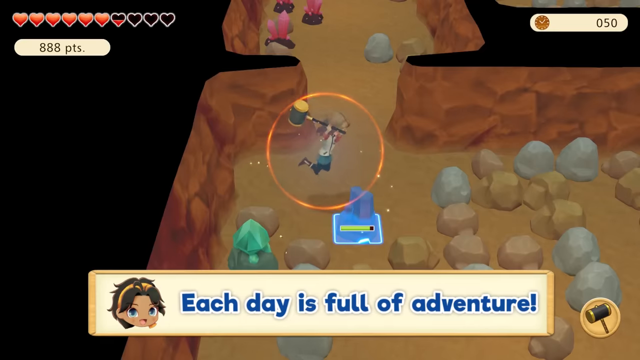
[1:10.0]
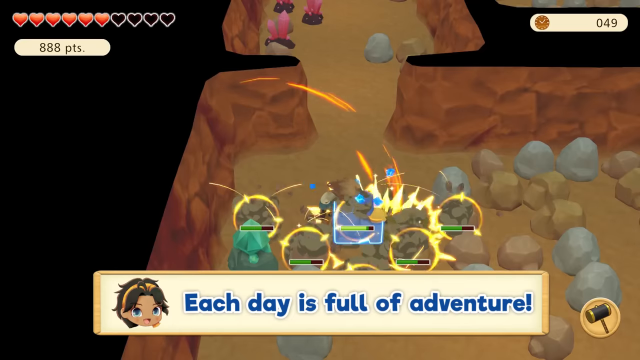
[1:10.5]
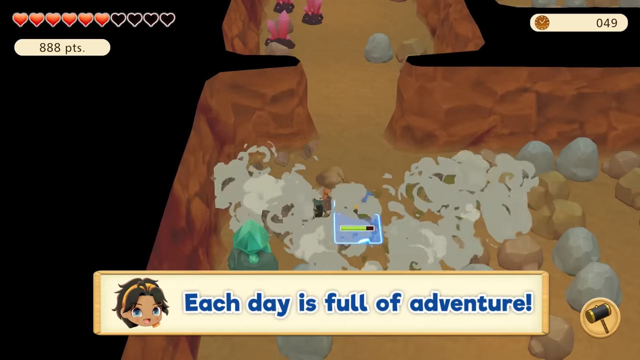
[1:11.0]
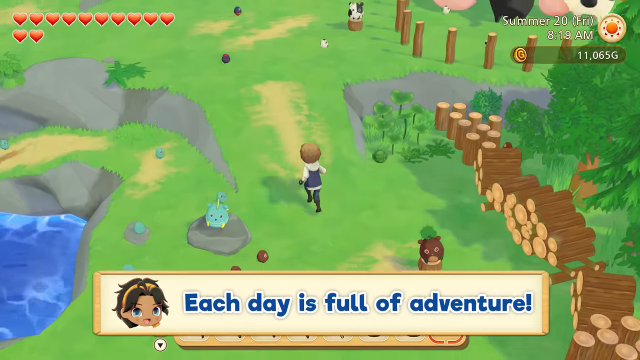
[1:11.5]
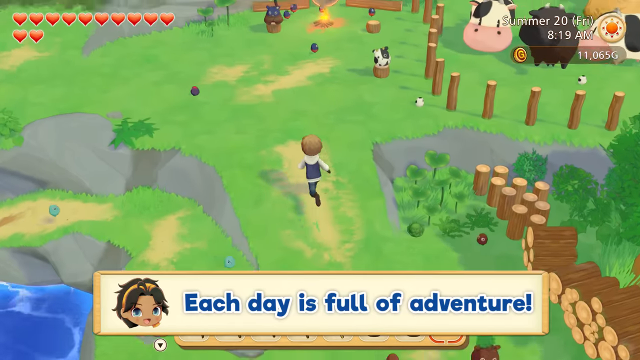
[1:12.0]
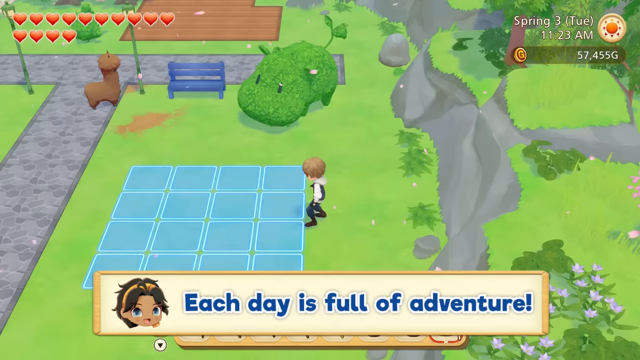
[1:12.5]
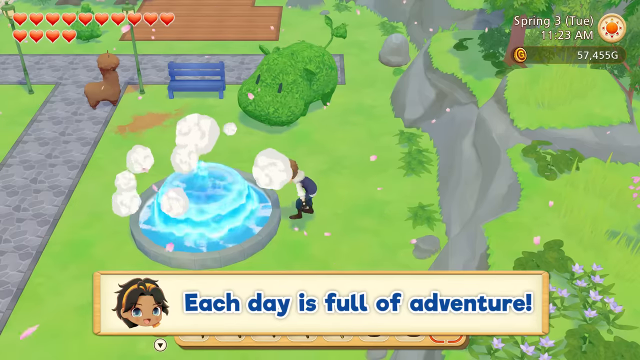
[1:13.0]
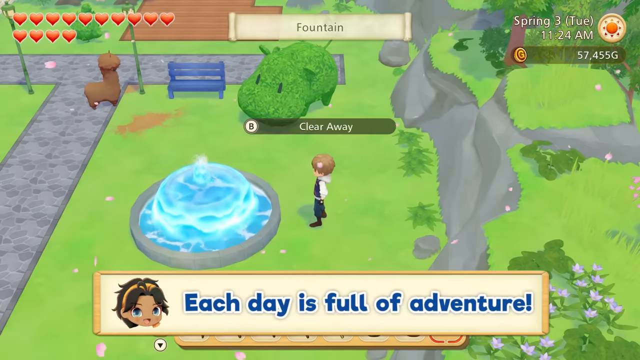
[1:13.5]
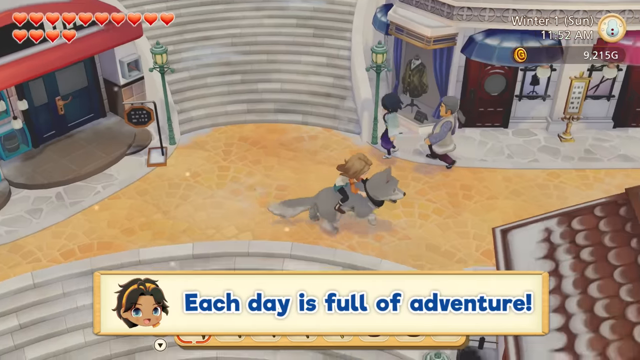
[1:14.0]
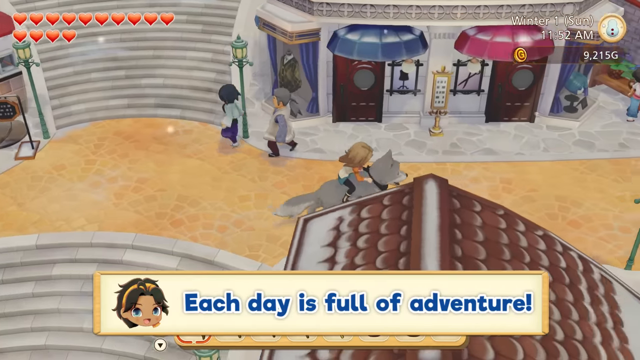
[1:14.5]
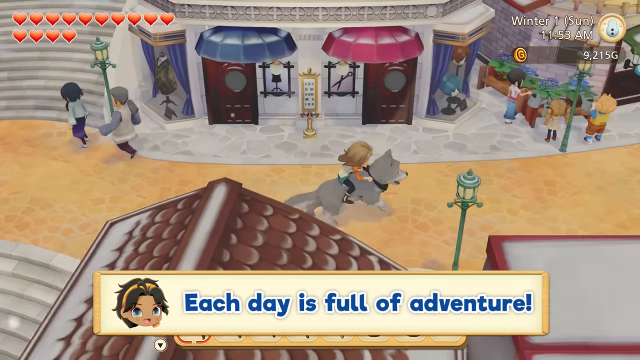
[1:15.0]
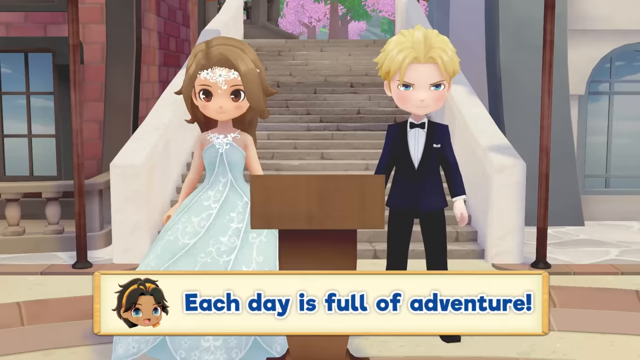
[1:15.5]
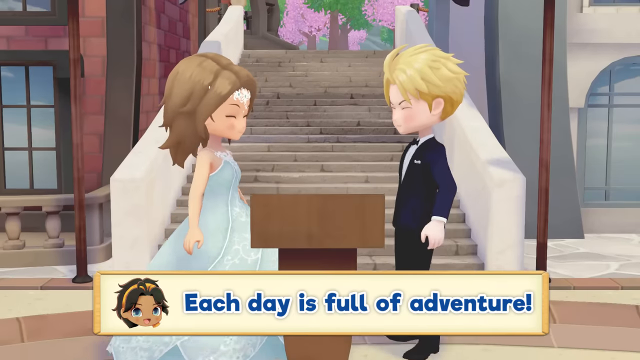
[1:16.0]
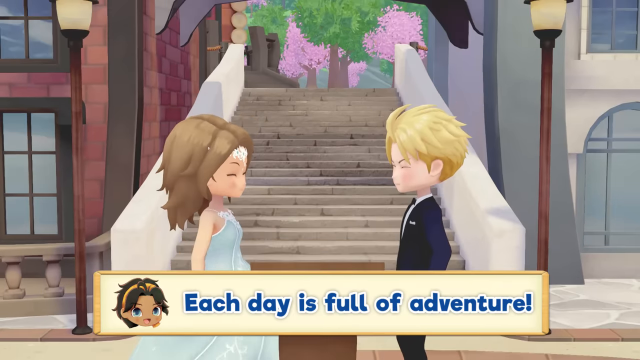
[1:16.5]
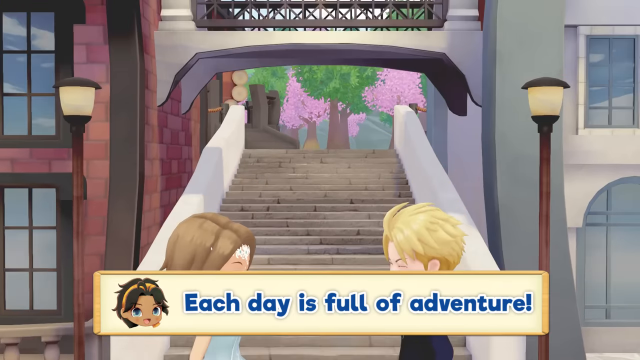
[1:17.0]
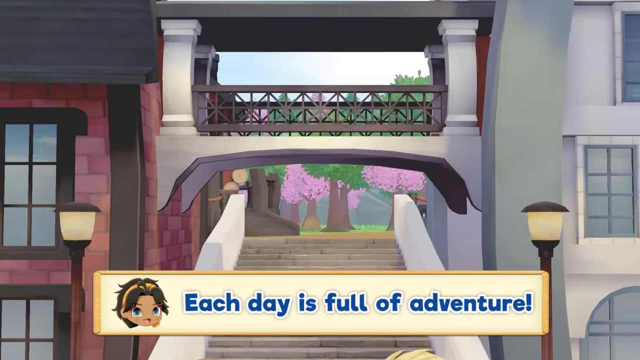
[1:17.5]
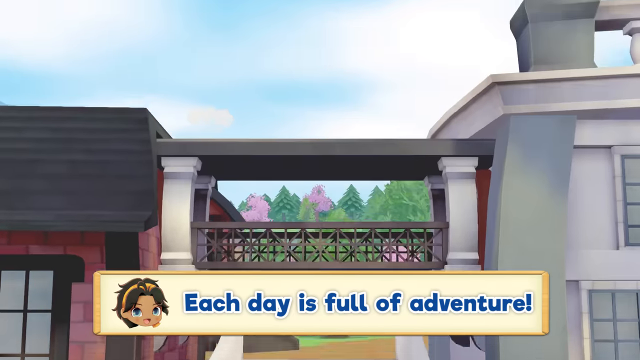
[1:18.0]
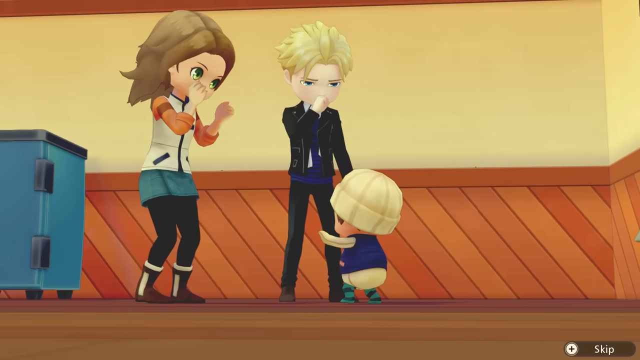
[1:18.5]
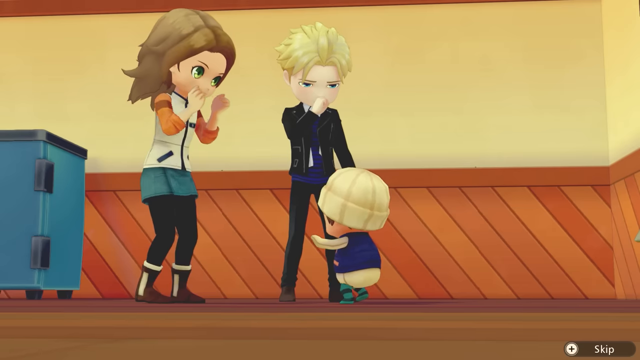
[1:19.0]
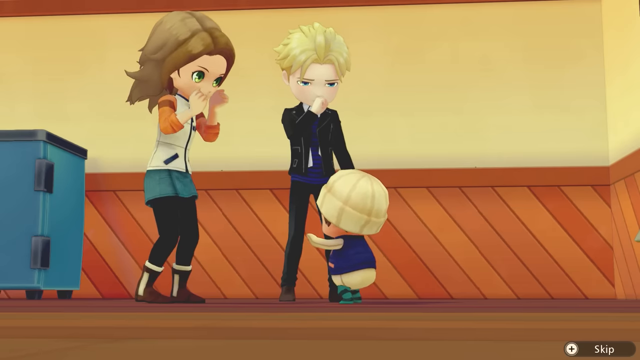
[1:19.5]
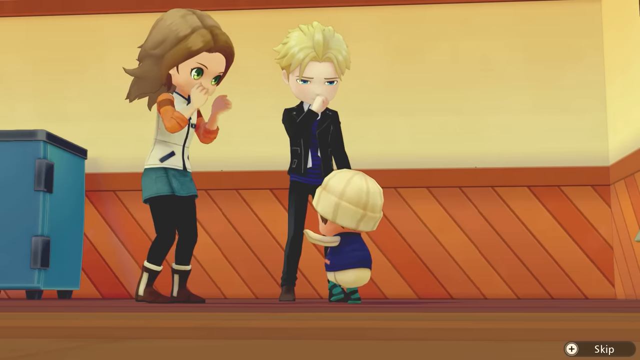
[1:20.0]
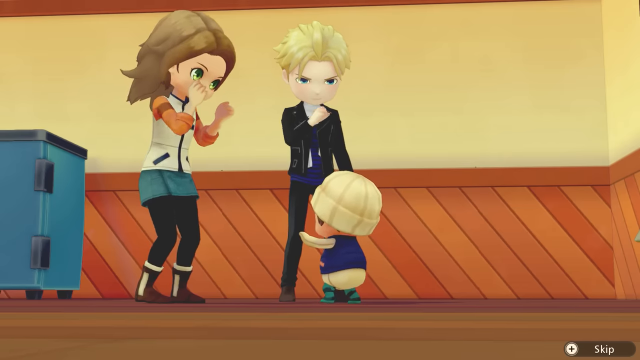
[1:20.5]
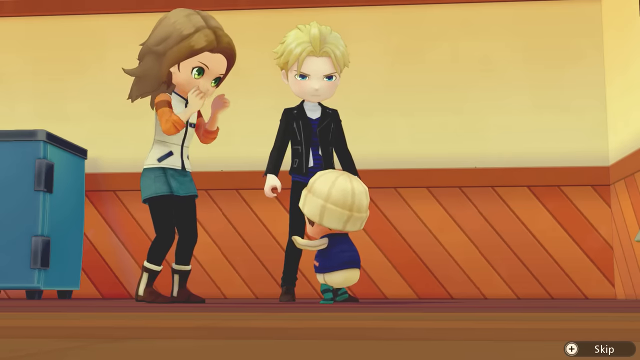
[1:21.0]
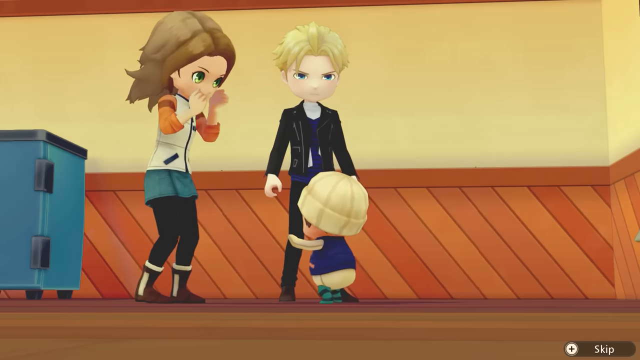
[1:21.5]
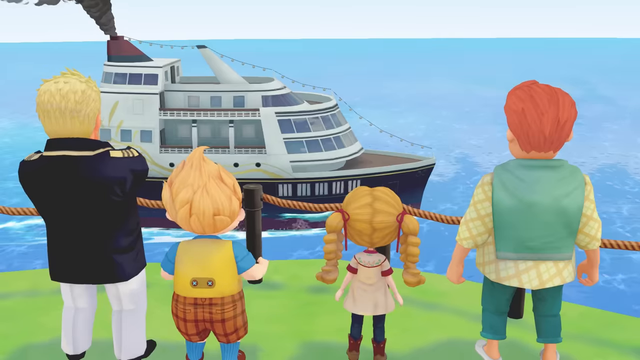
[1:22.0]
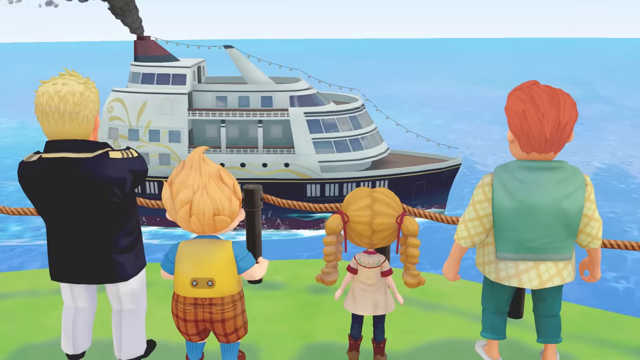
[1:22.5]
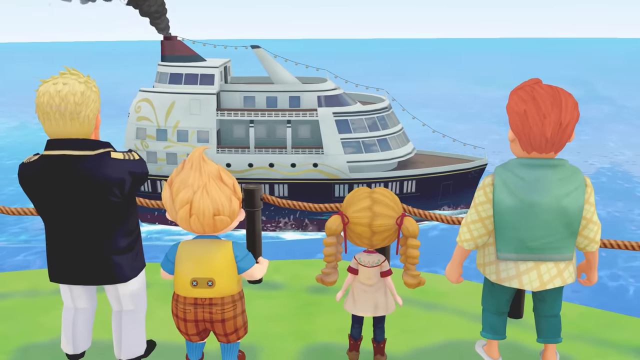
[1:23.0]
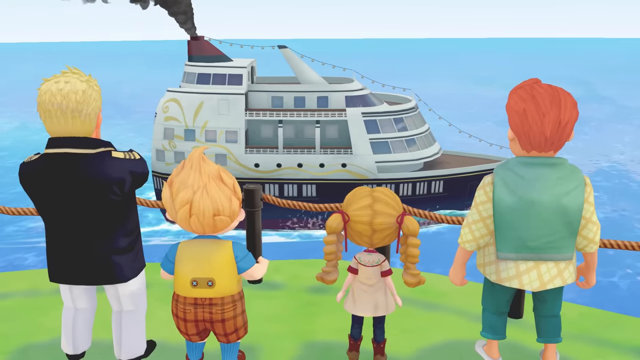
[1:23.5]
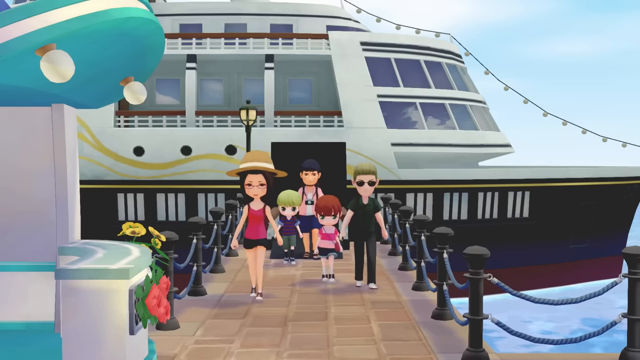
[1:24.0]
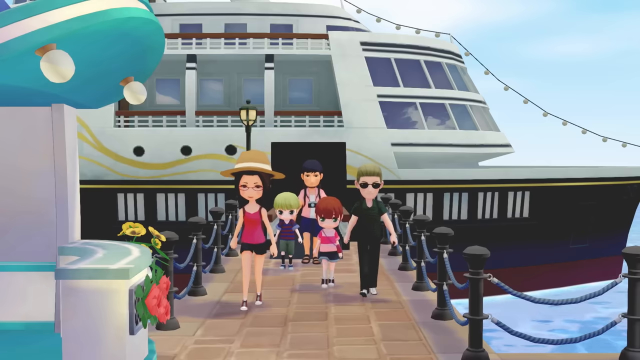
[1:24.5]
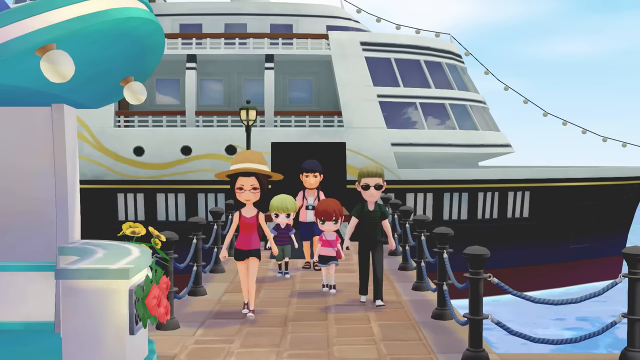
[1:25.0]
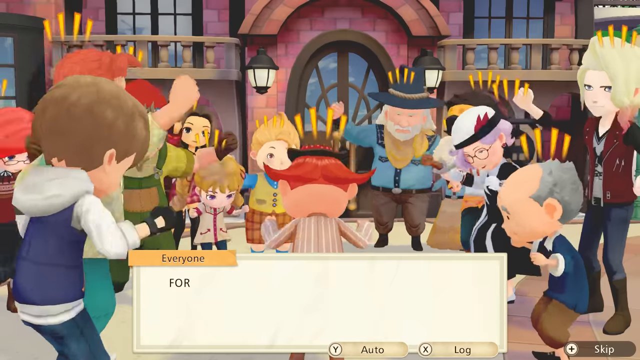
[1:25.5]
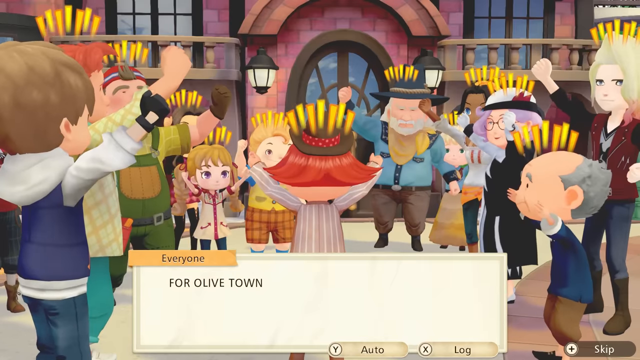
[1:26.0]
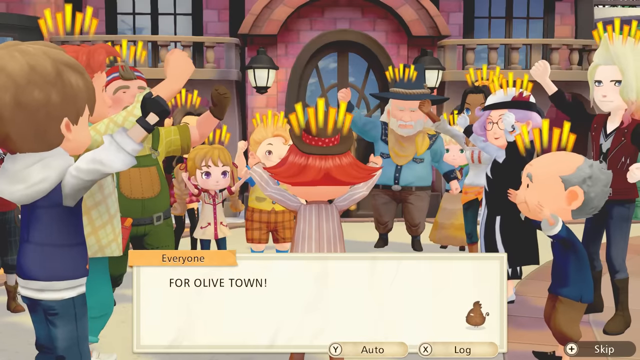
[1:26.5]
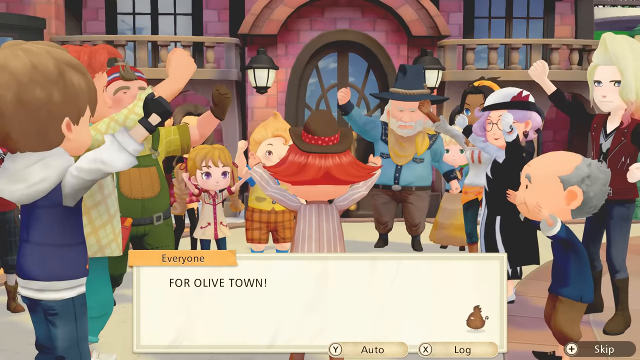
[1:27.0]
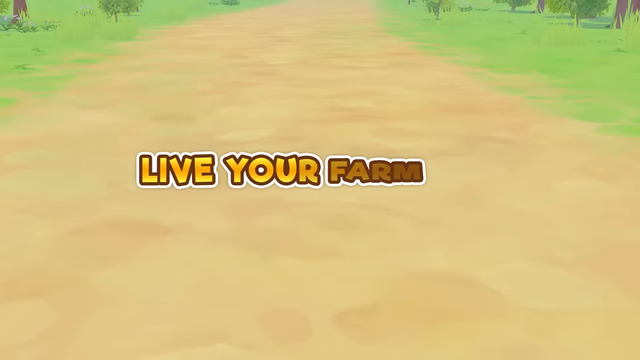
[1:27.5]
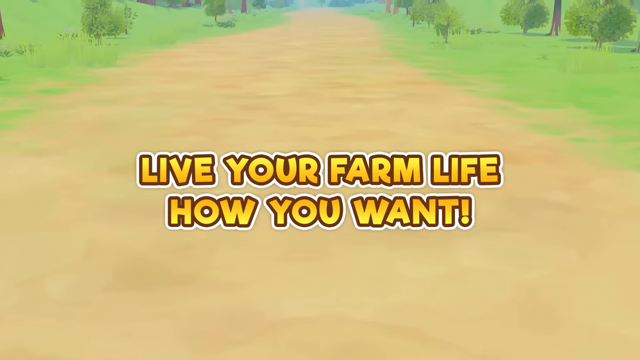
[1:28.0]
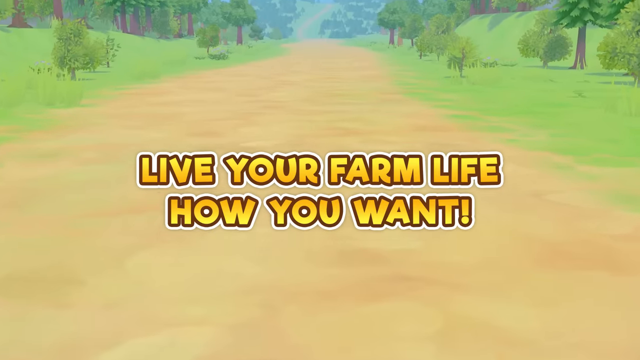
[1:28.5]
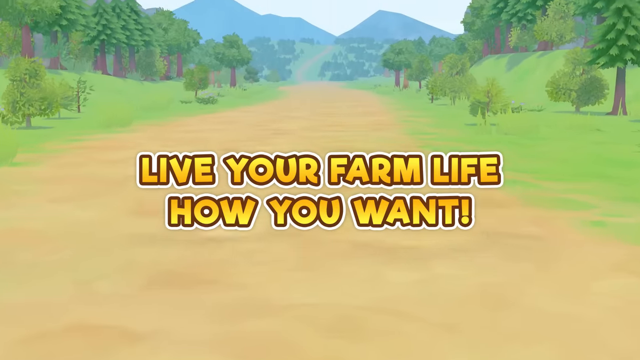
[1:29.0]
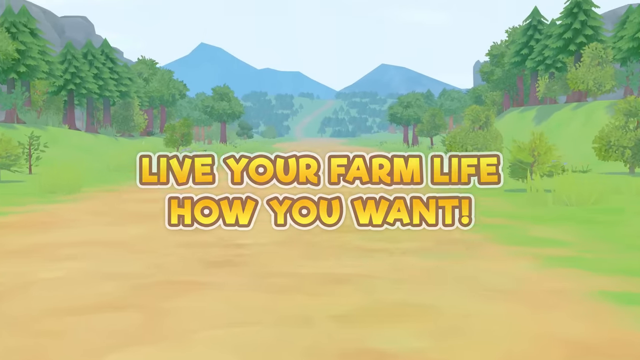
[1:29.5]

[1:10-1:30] The screen says "each day is full of adventure." The character does various activities, including getting married. A cruise ship appears that is fairly small, kind of like half a cruise ship, resembling three buildings in the ocean. The character has a kid, dances for the kid, and gets off the cruise ship.